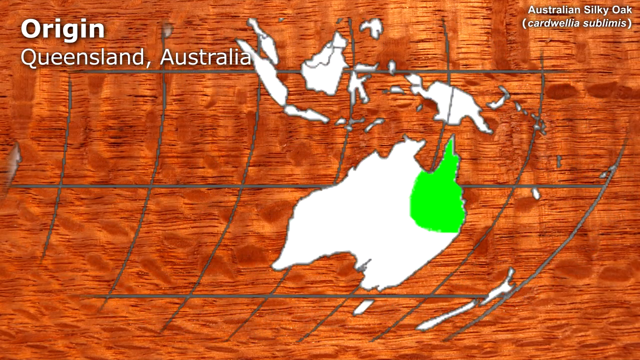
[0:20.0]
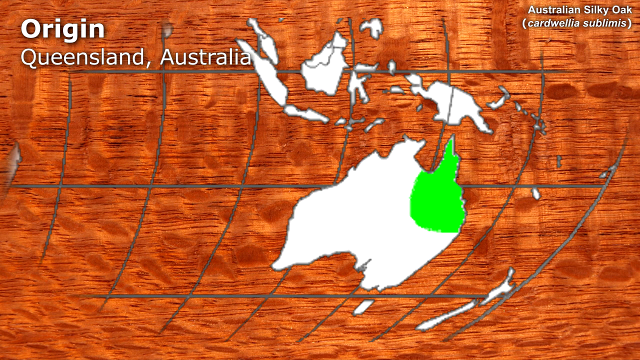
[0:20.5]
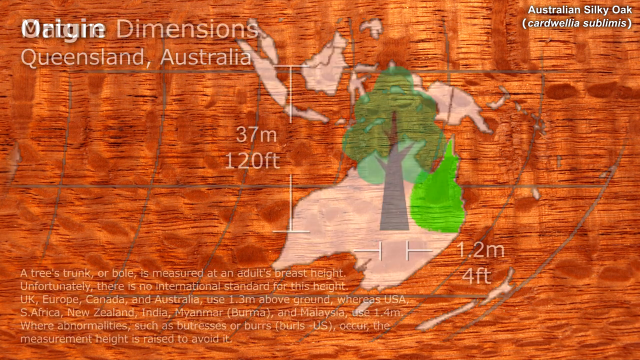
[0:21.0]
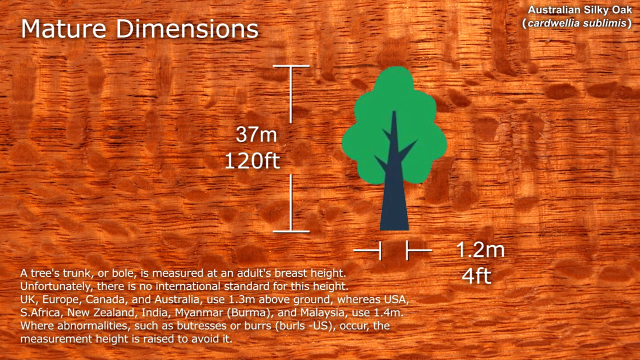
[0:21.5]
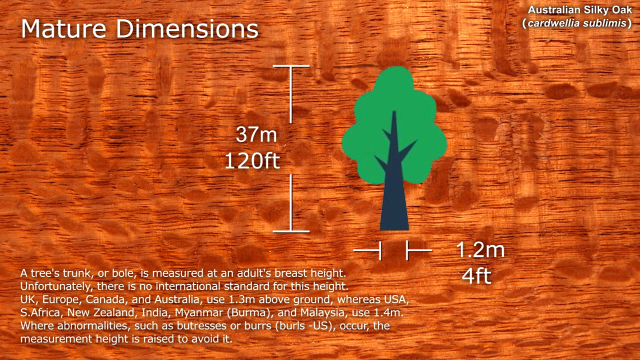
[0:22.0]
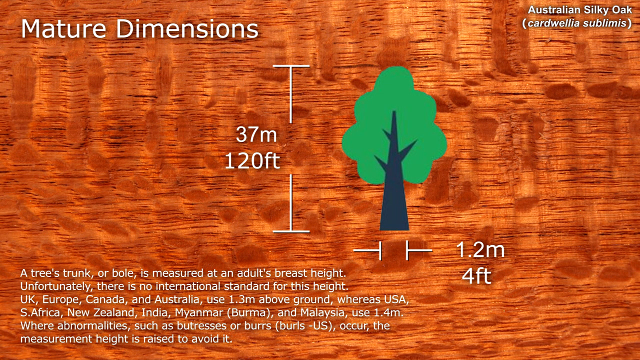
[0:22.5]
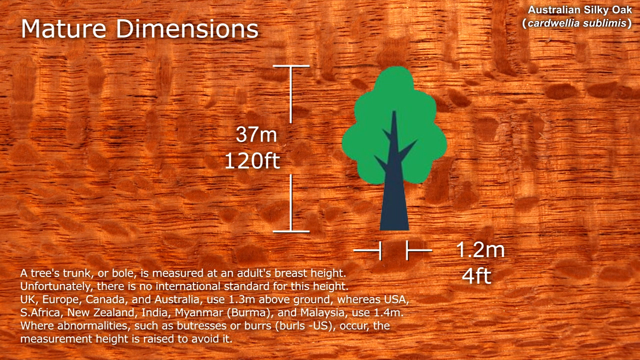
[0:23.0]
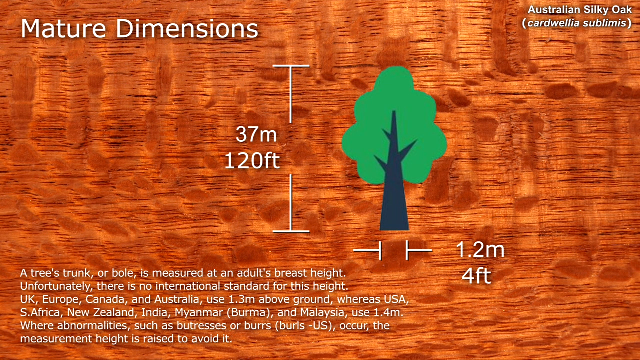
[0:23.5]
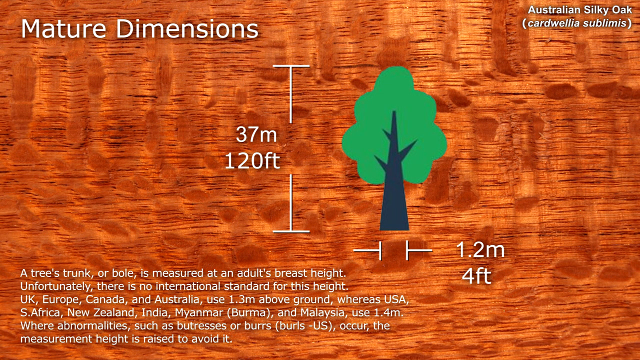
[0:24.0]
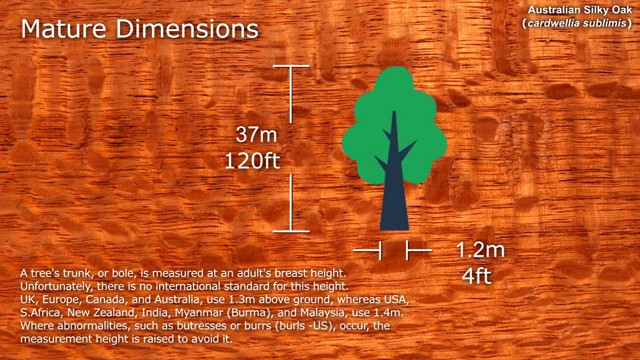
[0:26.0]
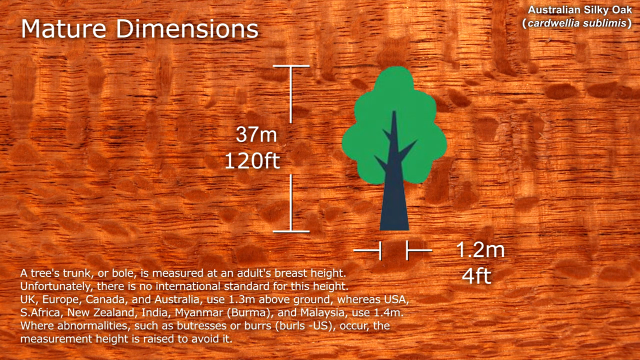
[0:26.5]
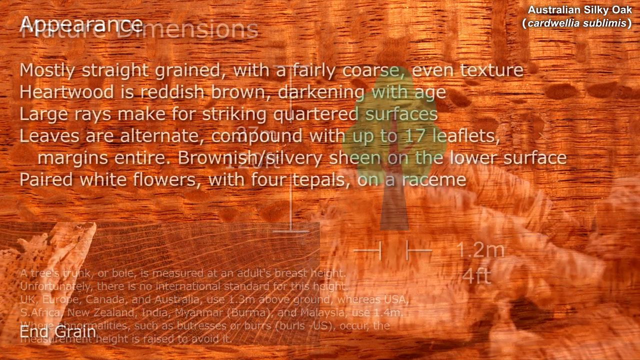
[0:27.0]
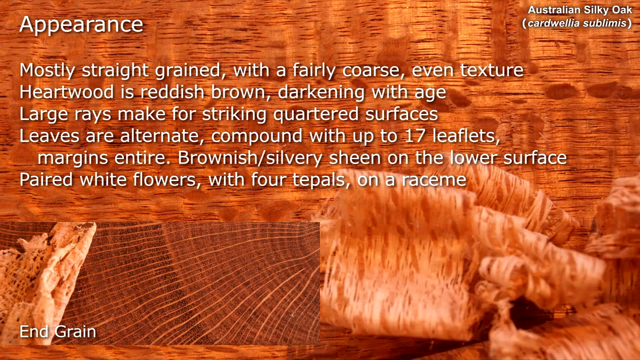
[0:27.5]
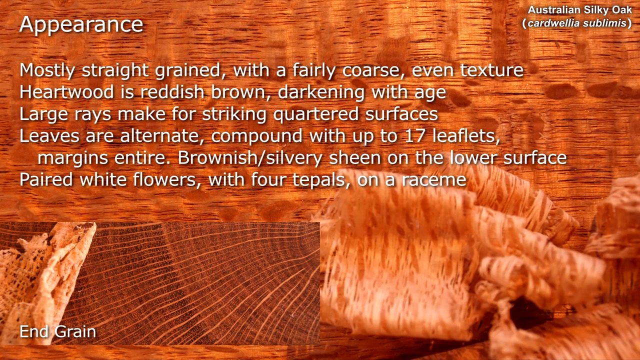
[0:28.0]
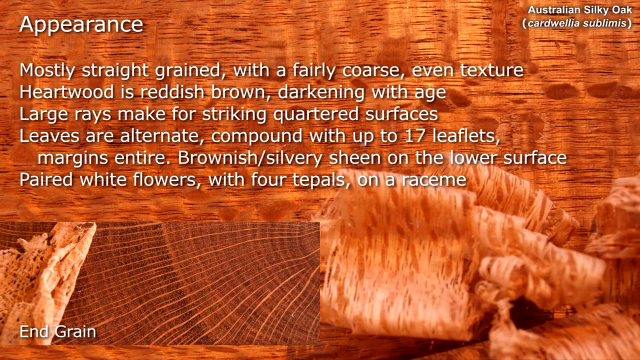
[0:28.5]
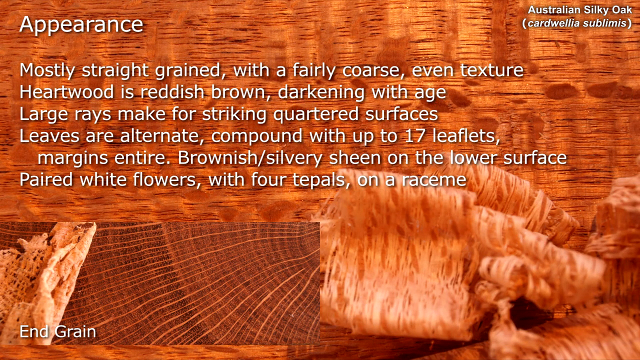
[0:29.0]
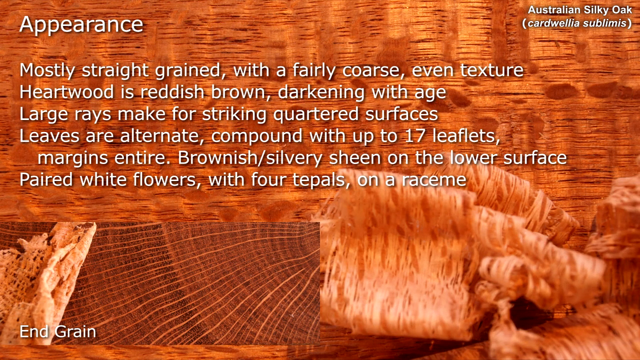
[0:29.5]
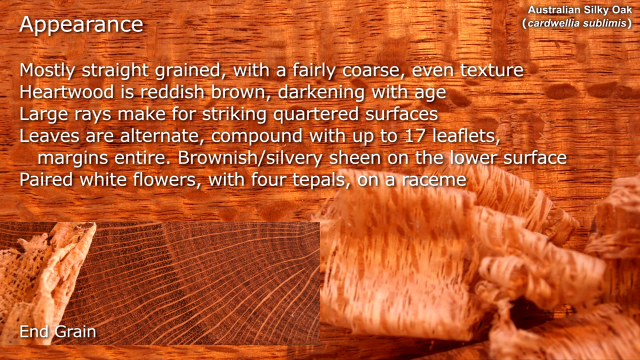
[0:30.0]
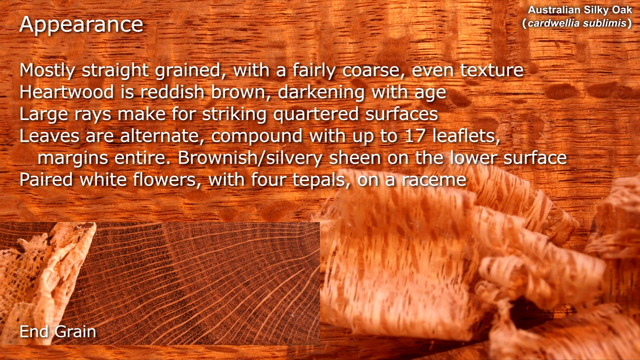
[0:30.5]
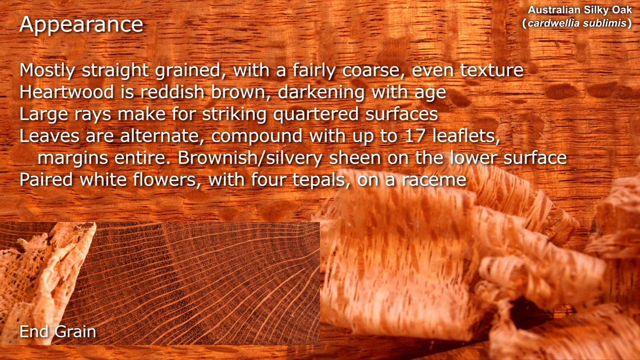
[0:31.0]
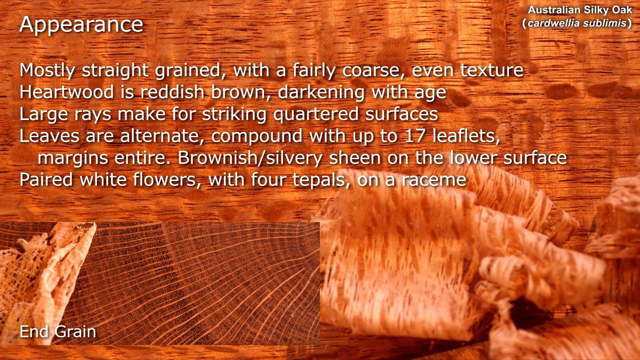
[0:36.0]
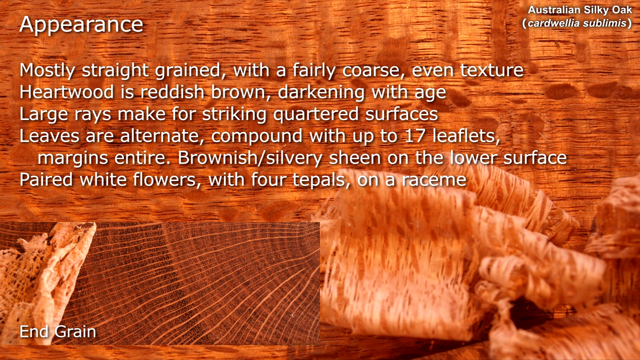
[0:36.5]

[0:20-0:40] A zoomed-in image of Australia on the world map fills the view, with a woody-textured background, the country in white, and Queensland highlighted in green. The top left corner reads "origin Queensland and Australia" and the right corner reads "Australia silky oak, cardwellia sublimis". Australia then disappears and is replaced by a clip-art image of a tree with green leaves. Lines on the left side measure the tree's height, labeled "37m, 120 feet", and lines underneath the tree measure its width, labeled "1.2m, 4 feet". In the bottom left corner, a small paragraph gives information on how to measure a tree's trunk and on different international standards. The tree then disappears and white text appears with the heading "appearance", followed by a paragraph about the appearance of the wood's grain, the texture of the surface, and the flowers. A small rectangular picture of what looks like a tree trunk with various lines running through it appears, with the caption "end grain" at its bottom left.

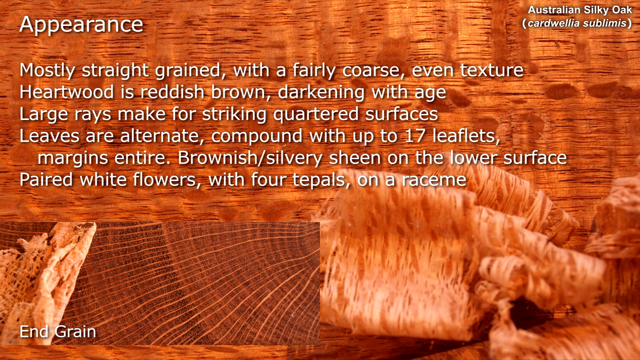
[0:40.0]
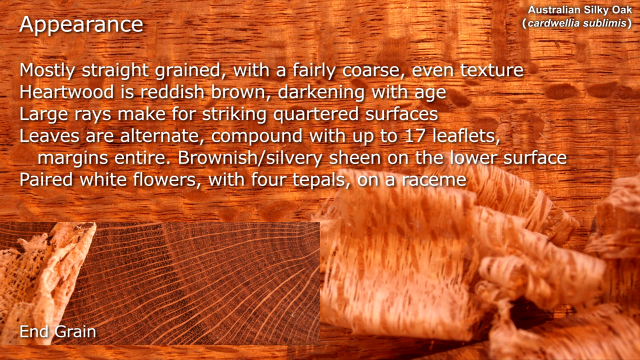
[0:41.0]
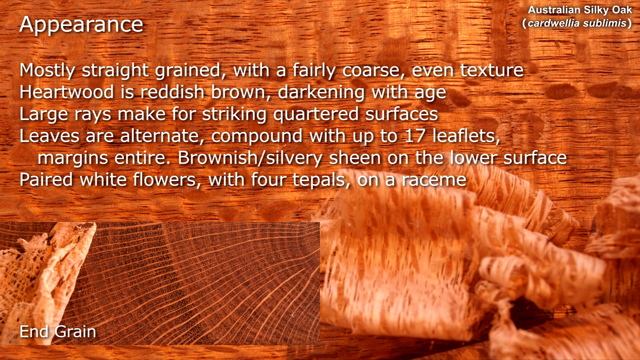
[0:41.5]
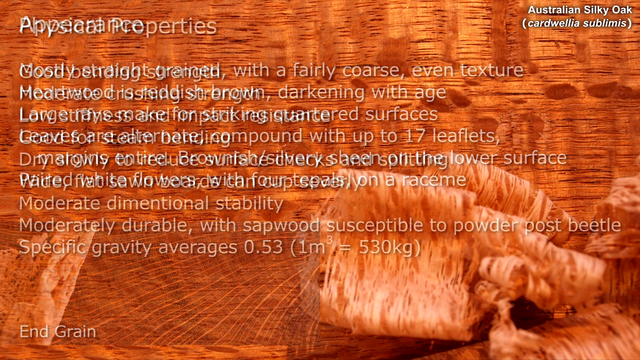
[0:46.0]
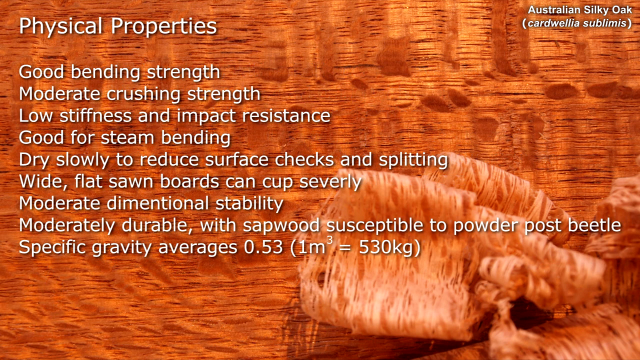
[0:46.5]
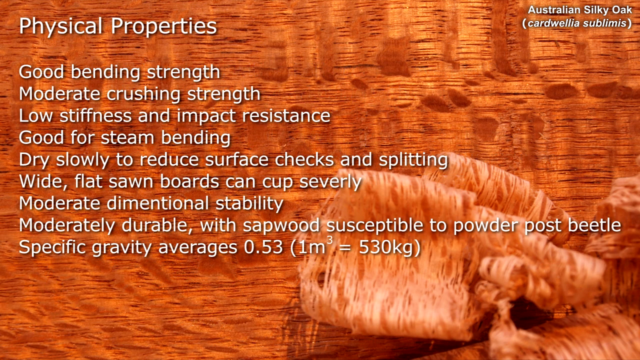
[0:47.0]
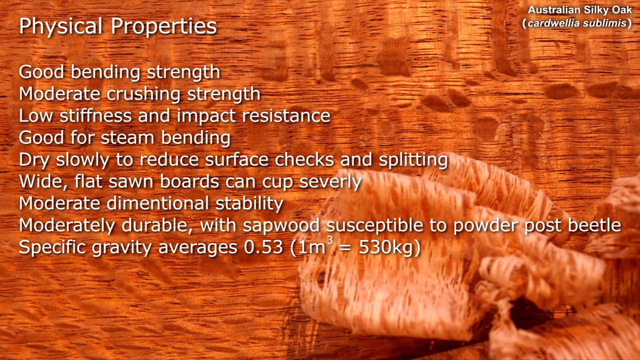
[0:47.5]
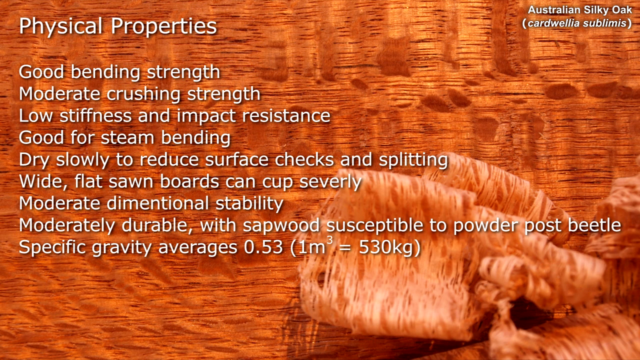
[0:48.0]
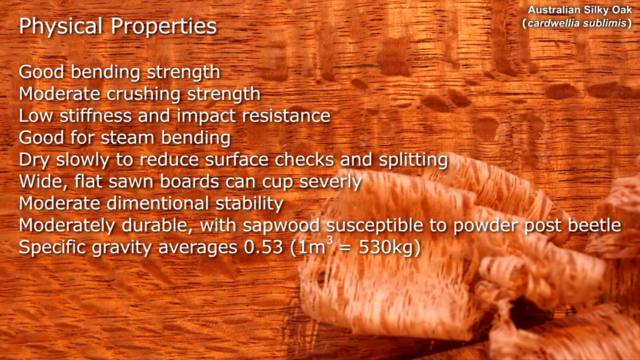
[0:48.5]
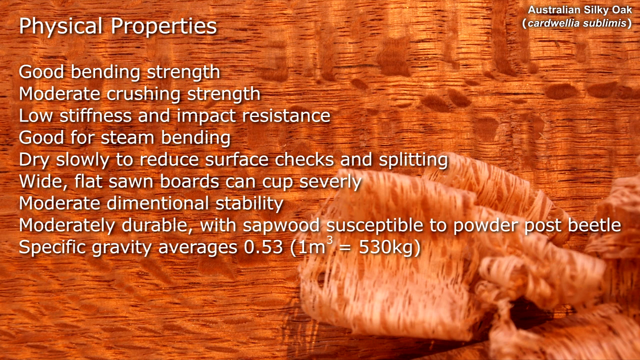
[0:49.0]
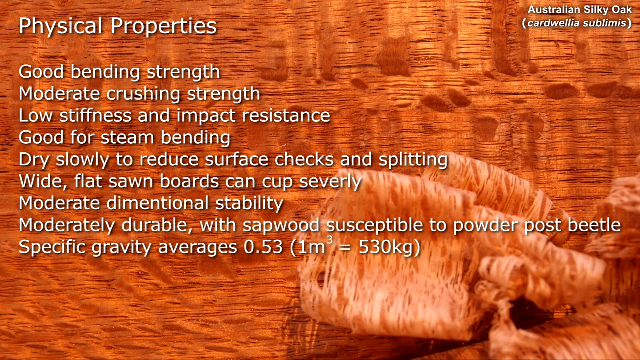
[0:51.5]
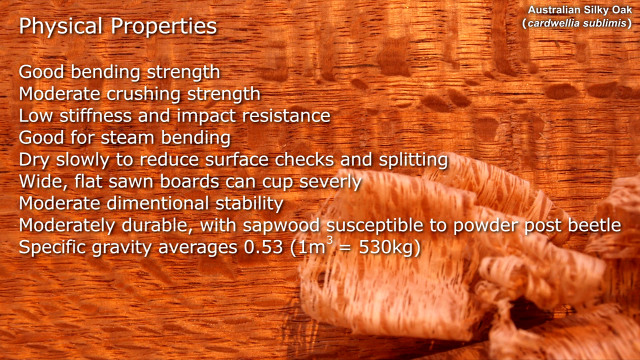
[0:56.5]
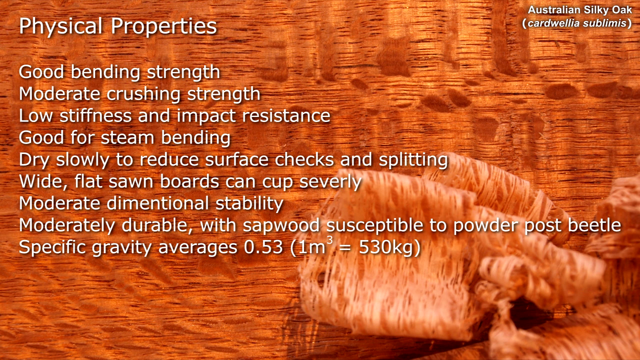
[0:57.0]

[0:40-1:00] The background looks somewhat like wood, a light brown tree texture. In the top left corner is the white heading "Appearance", and in the top right corner, in smaller white font, "Australian Silky Oak, Cardwellia Sublimis". A paragraph in white font over the background reads "Mostly straight-grained with a fairly coarse, even texture. Heartwood is reddish-brown, darkening with age. Large rays make for striking quartered surfaces. Leaves are alternate, compound with up to 17 leaflets" and continues "Brownish silvery sheen on the lower surface, paired white flowers with four tepals on a raceme." In the bottom left corner is an image that looks like a close-up of the texture of a brown tree trunk with light-colored lines running through it. The text then changes and the image disappears; the heading now reads "Physical Properties", with a list underneath: "good bending strength, moderate crushing strength, low stiffness and impact resistance, good for steam bending, dry slowly to reduce surface checks and splitting, wide flat sawn boards can cup severly, moderate dimensional stability, moderately durable with sapwood susceptible to powder post beetle, specific gravity averages 0.53 (1 meter to the third power equals 530 kg)".